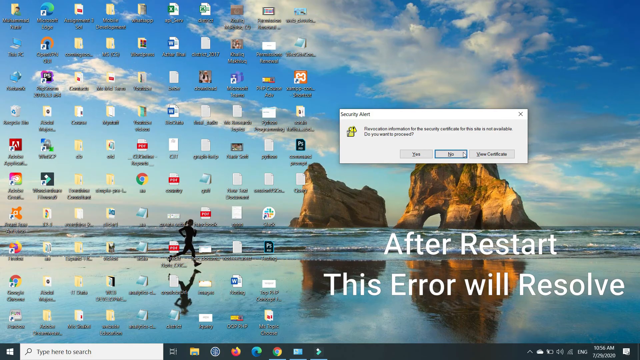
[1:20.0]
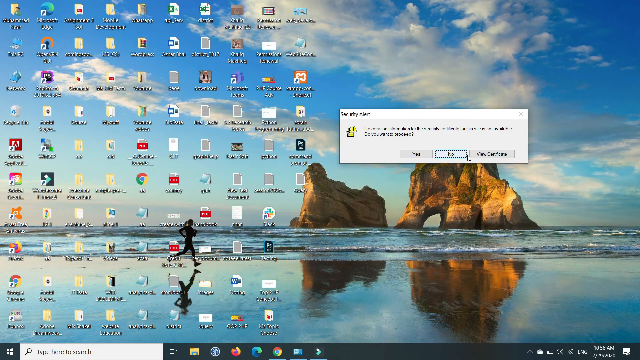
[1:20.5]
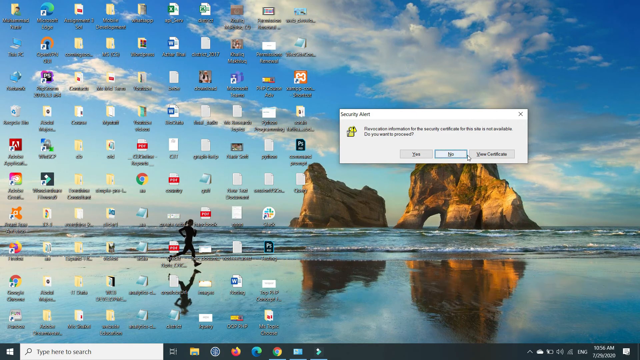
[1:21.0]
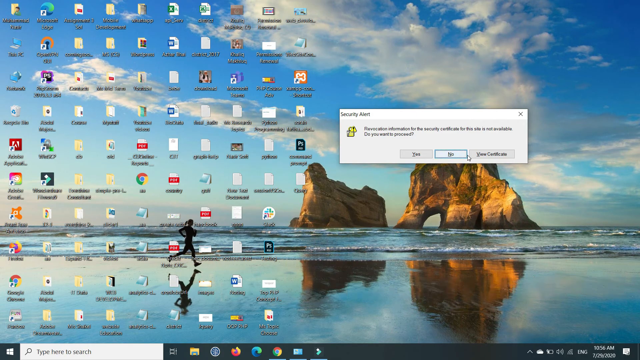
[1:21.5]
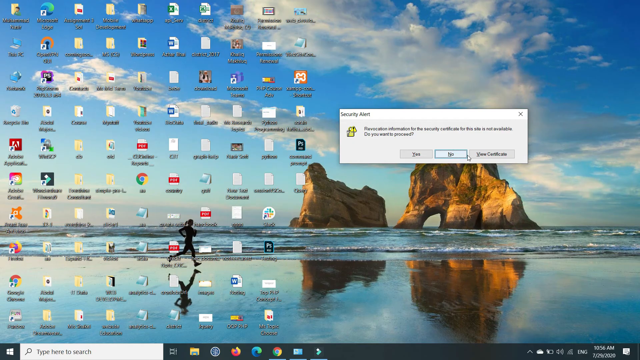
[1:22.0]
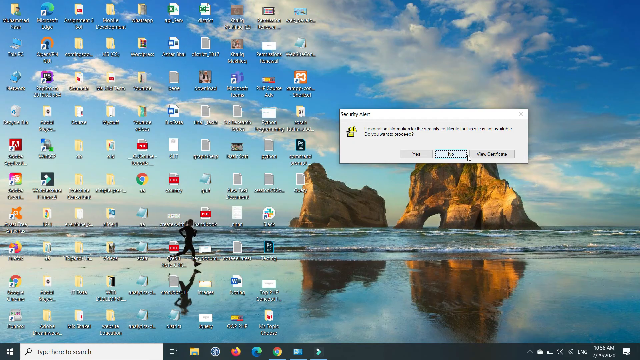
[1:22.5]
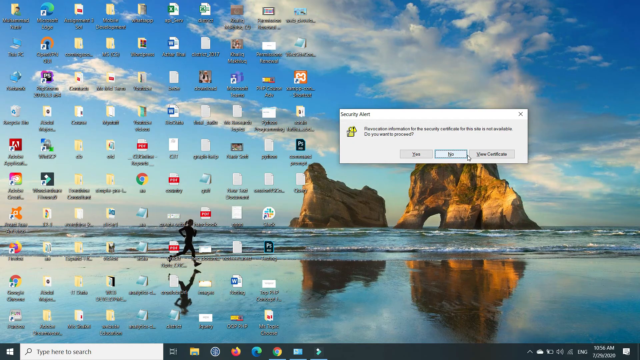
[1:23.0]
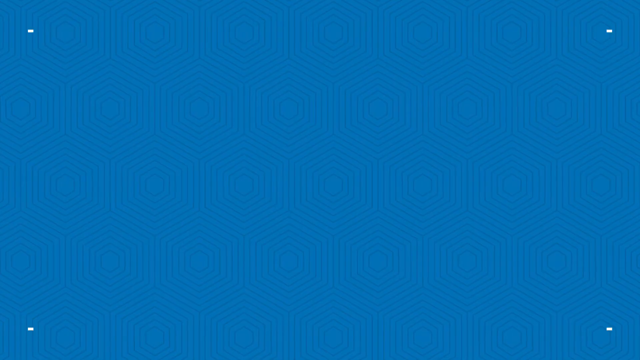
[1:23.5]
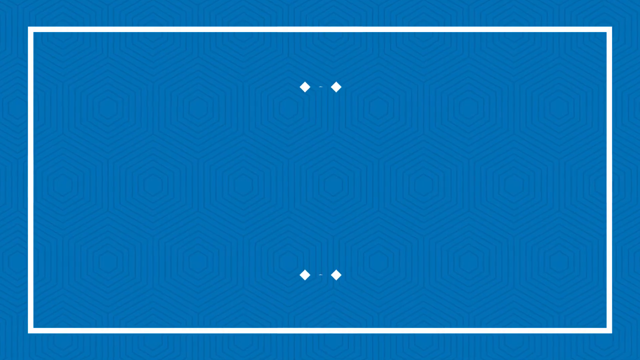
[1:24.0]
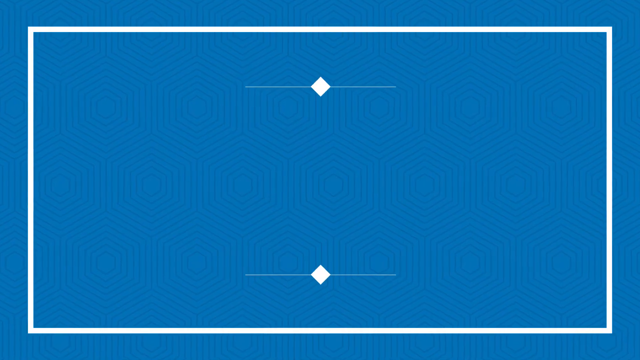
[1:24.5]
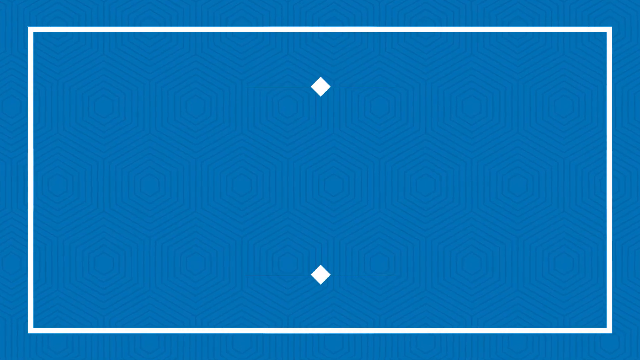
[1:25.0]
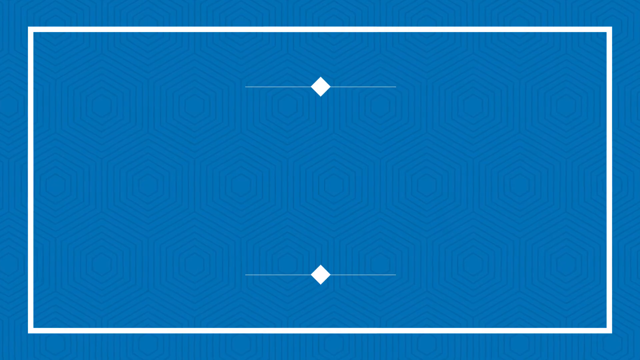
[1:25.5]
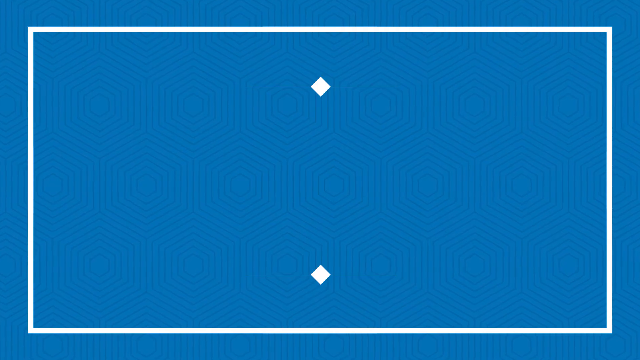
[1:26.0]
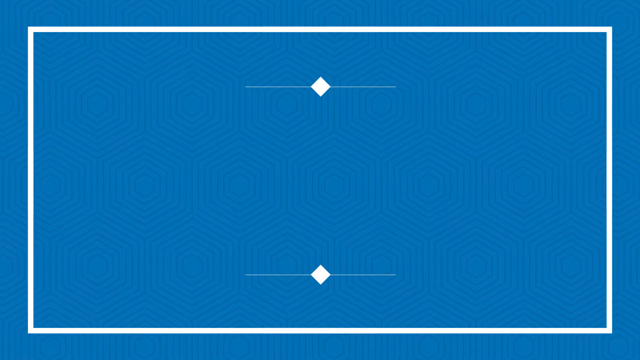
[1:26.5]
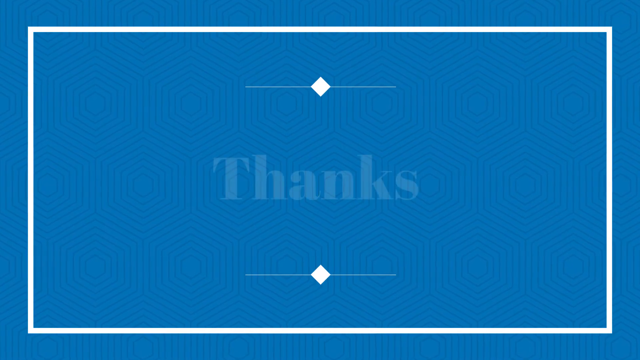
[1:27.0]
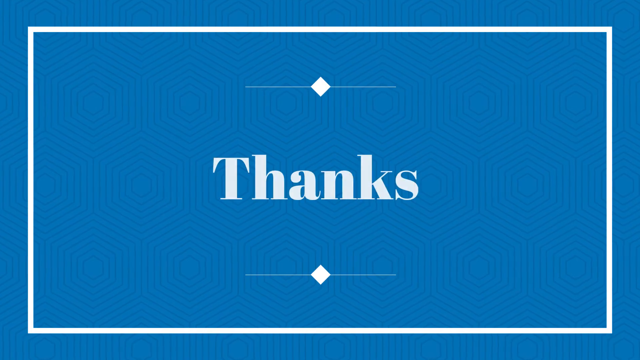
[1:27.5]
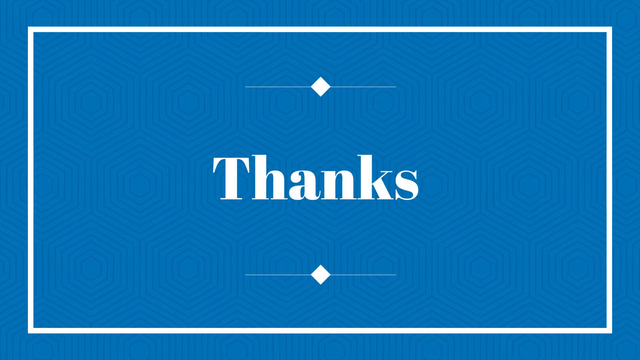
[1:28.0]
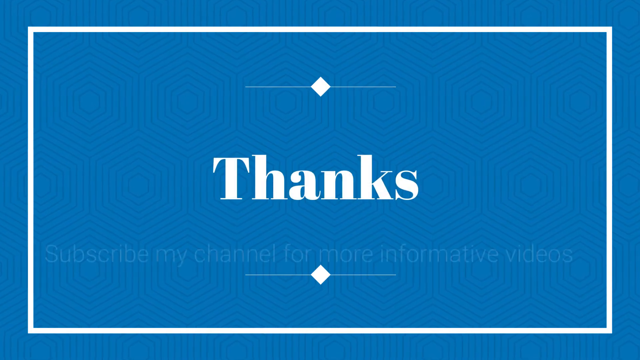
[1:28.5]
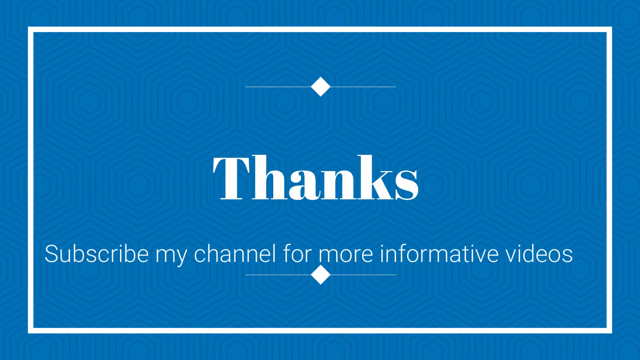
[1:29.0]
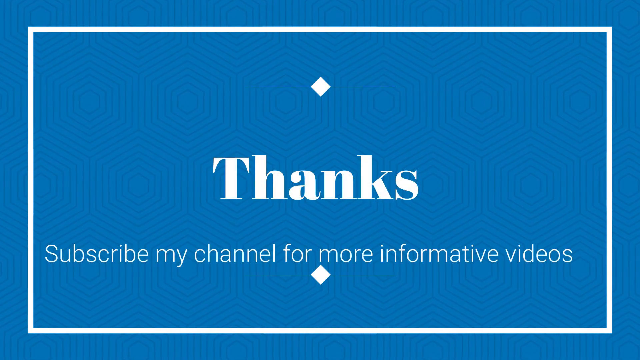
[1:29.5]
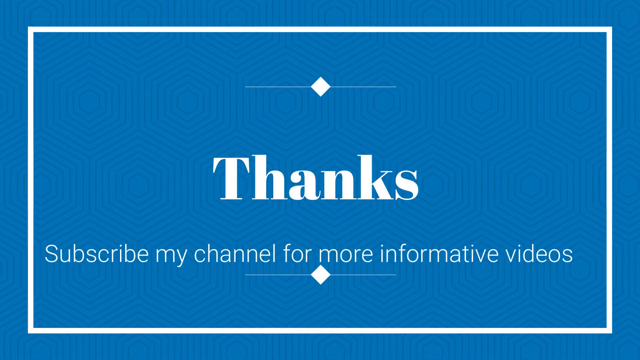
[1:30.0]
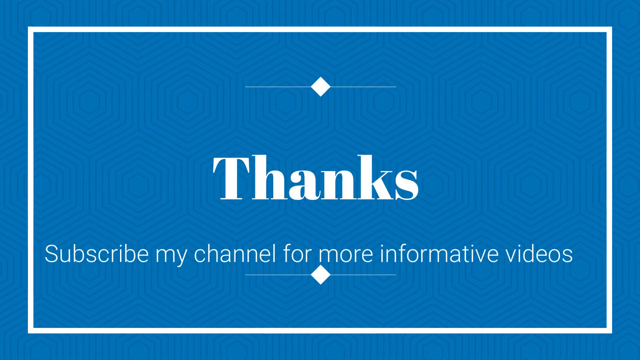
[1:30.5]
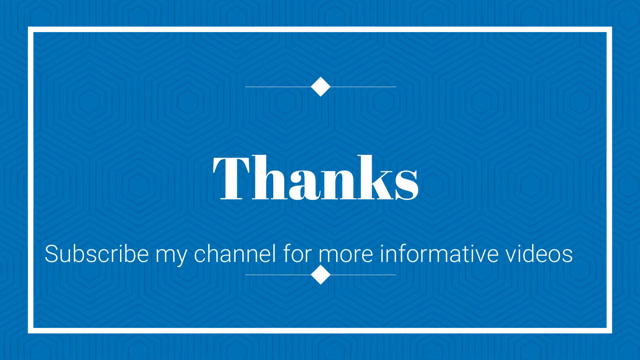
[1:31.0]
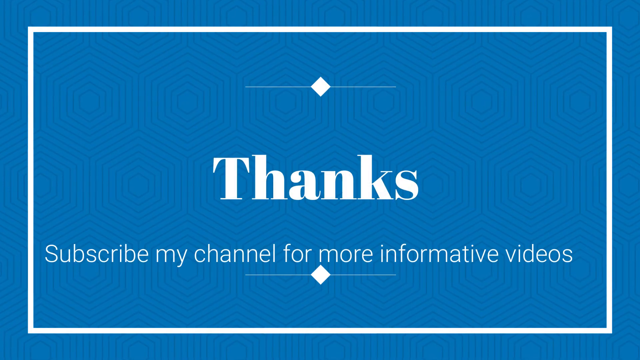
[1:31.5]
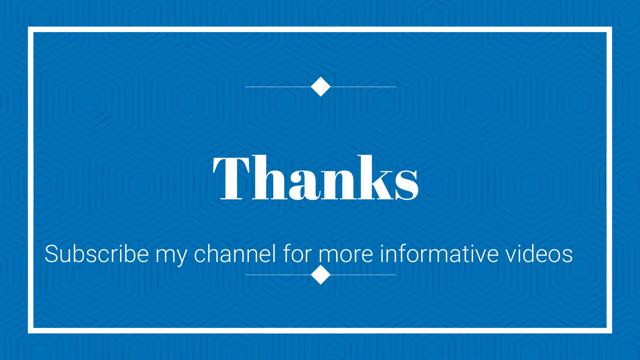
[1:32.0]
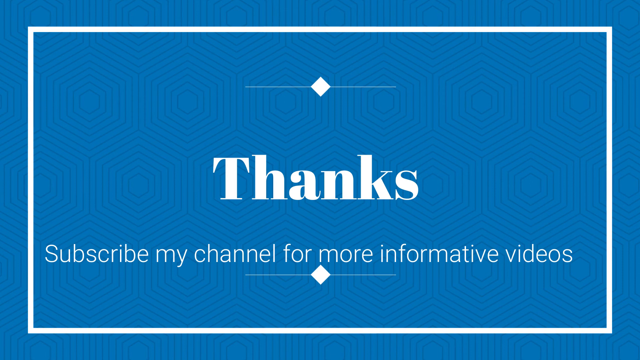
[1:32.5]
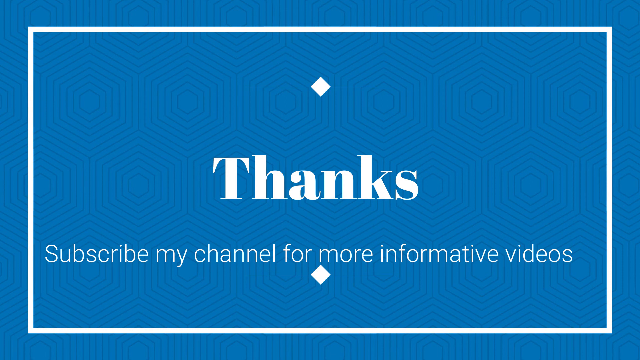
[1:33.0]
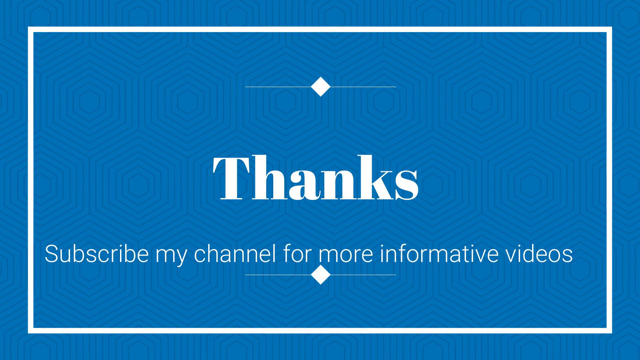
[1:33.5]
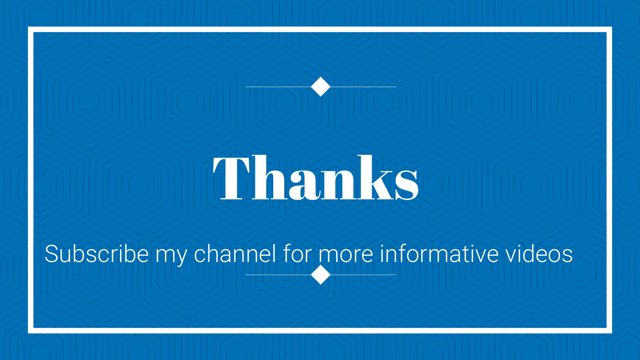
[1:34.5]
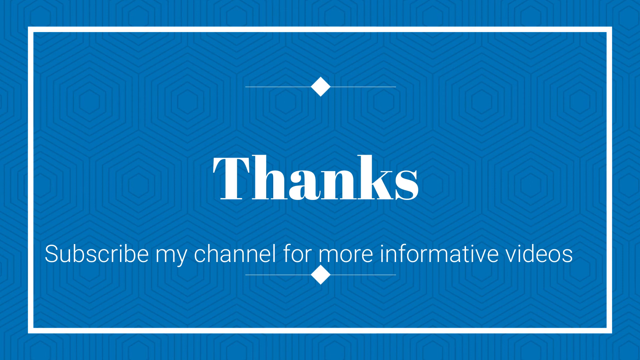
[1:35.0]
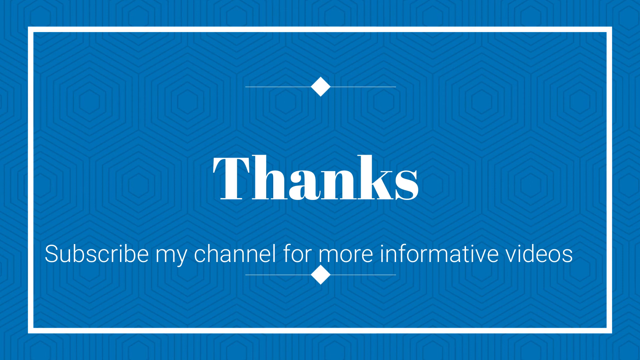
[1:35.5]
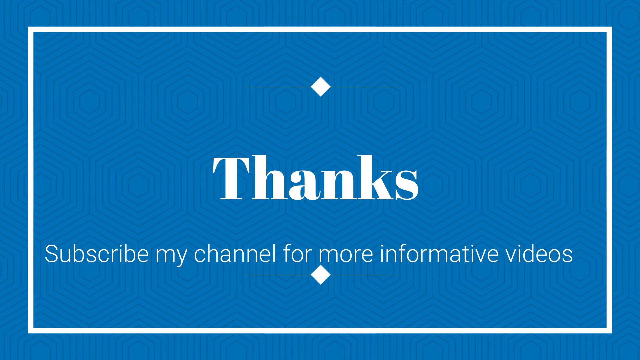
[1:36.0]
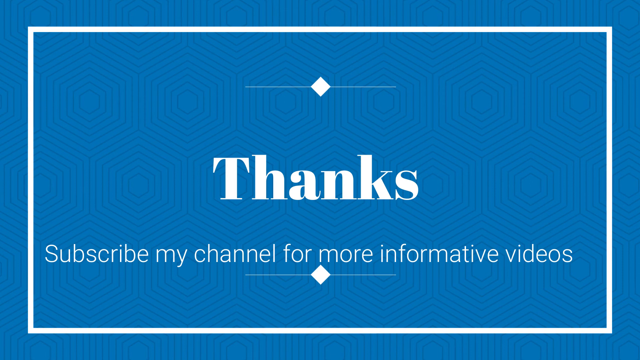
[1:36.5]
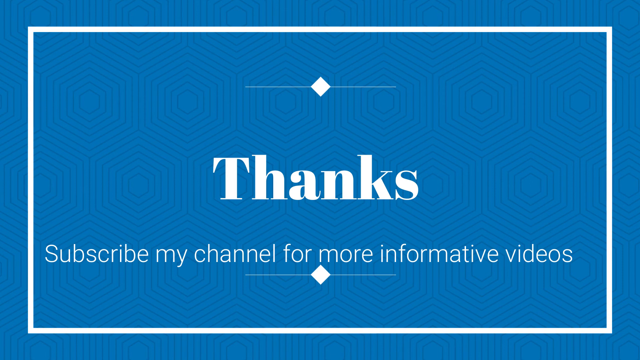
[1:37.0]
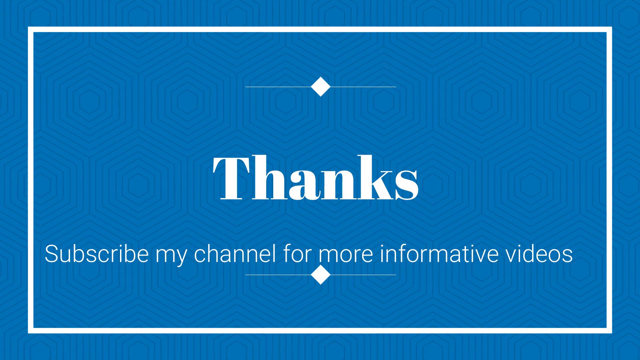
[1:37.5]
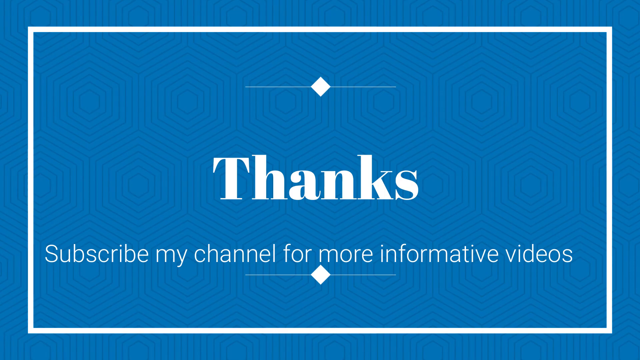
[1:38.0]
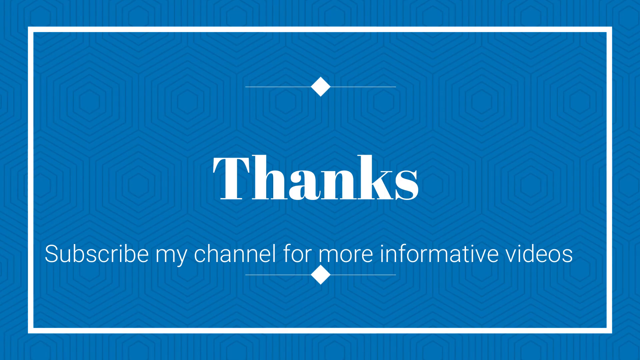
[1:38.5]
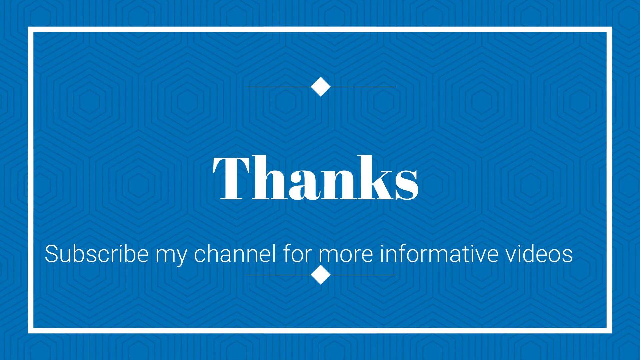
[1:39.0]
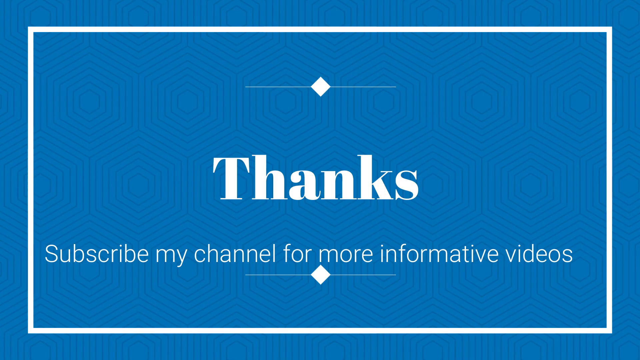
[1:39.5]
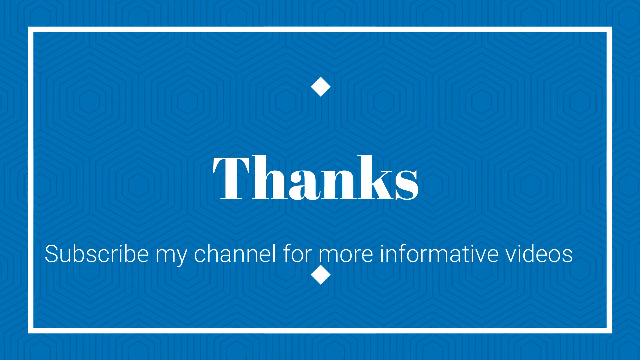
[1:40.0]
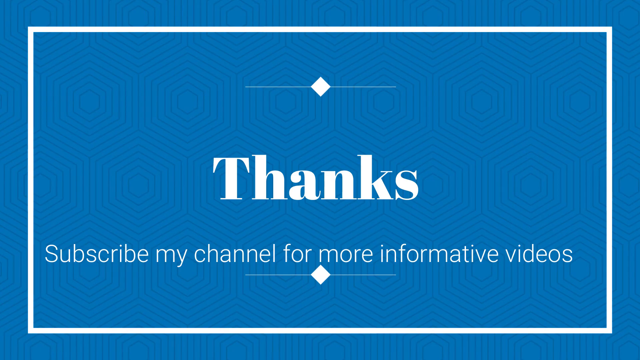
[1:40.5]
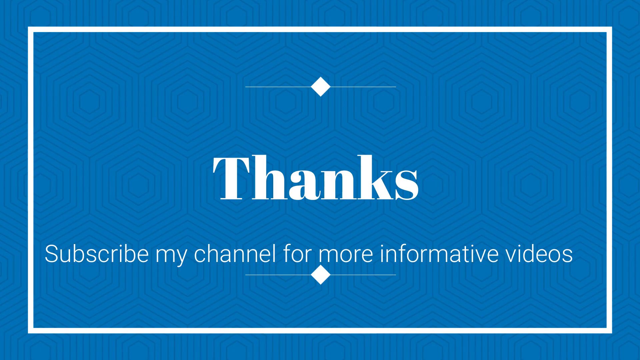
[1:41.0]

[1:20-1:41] The video ends by transitioning to a screen that reads "Thanks, subscribe to my channel for more informative videos." The desktop of the user making the video is visible, with dozens and dozens of icons on it that are shortcuts to different programs, software, text documents, and other documents such as PDF documents.